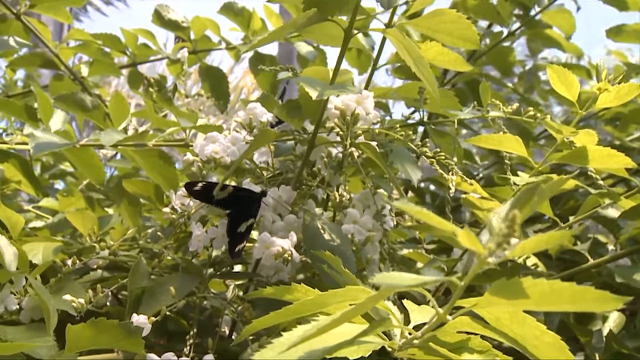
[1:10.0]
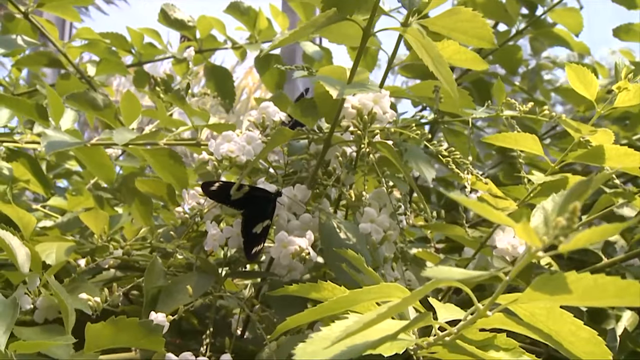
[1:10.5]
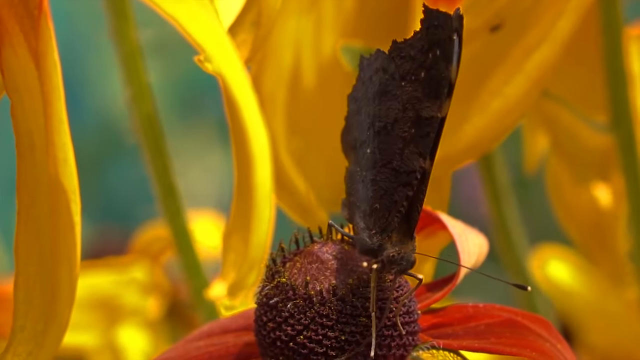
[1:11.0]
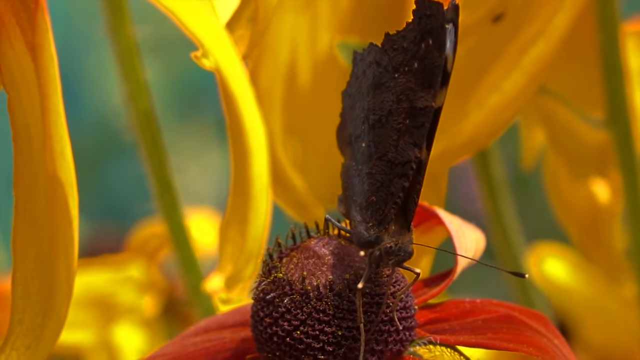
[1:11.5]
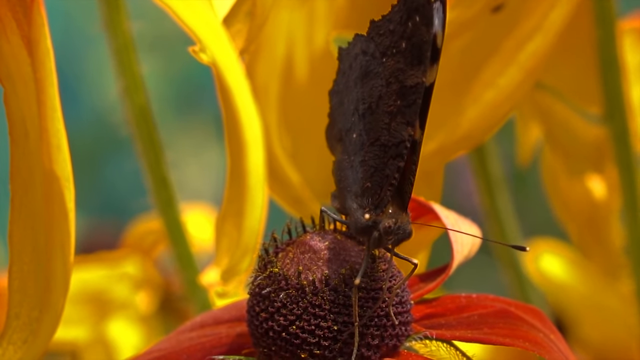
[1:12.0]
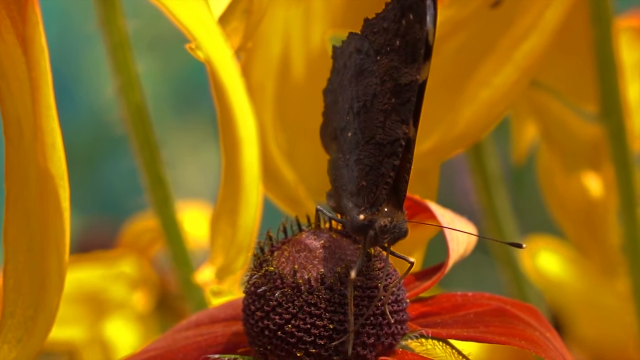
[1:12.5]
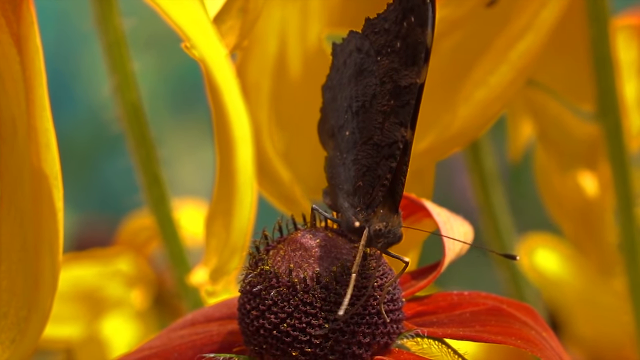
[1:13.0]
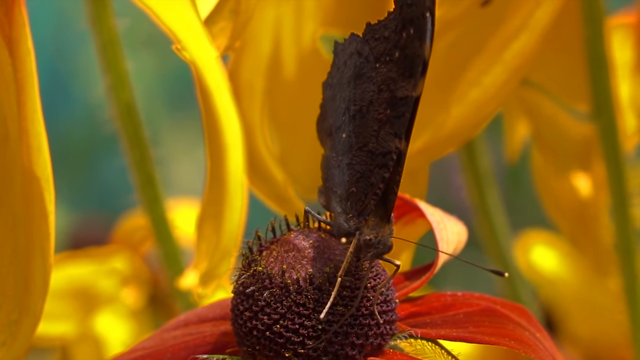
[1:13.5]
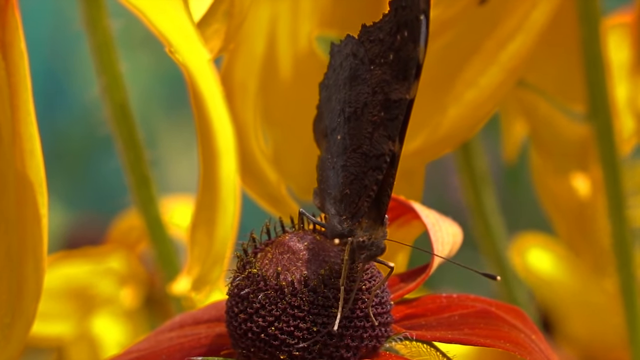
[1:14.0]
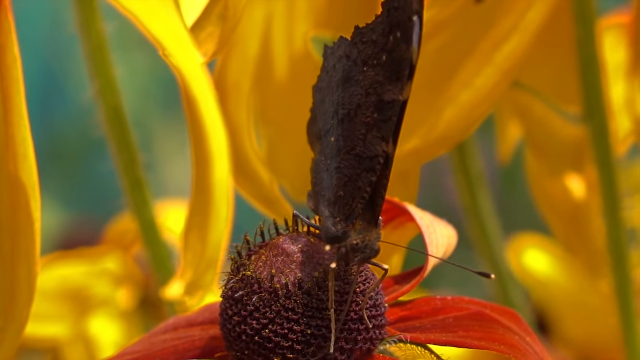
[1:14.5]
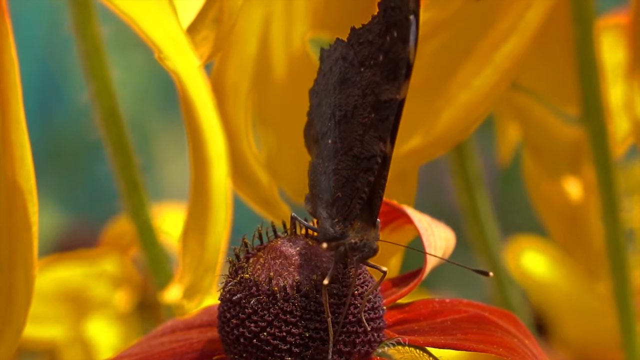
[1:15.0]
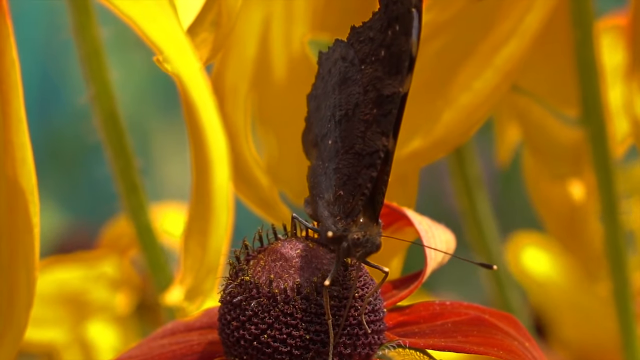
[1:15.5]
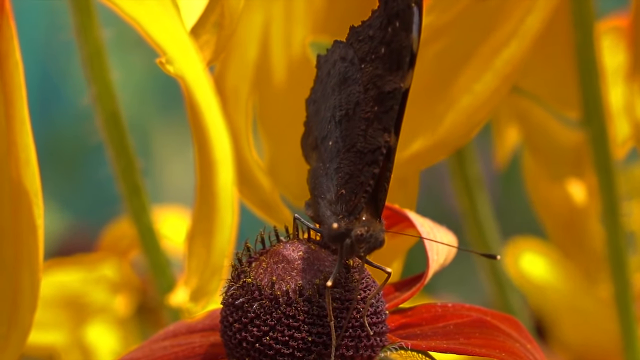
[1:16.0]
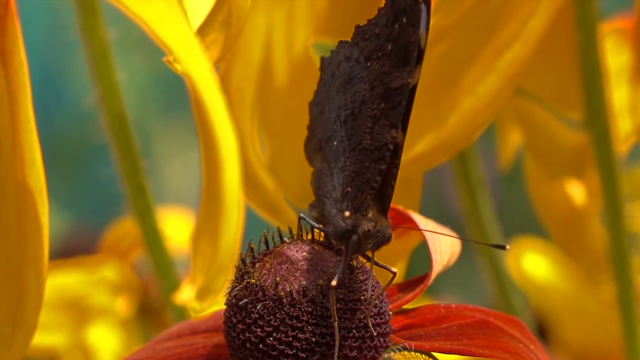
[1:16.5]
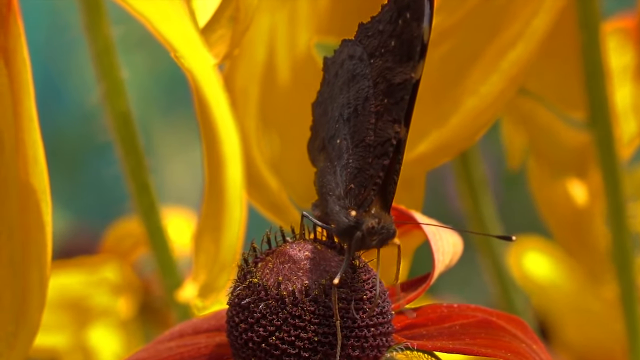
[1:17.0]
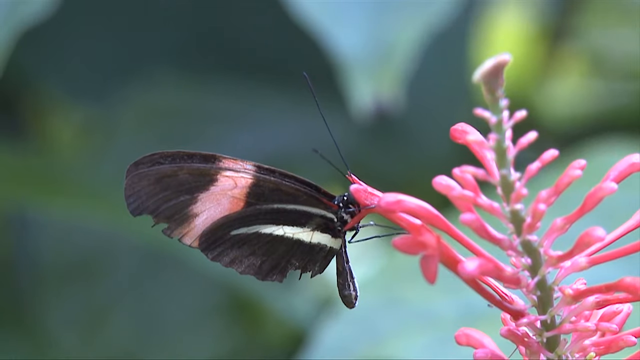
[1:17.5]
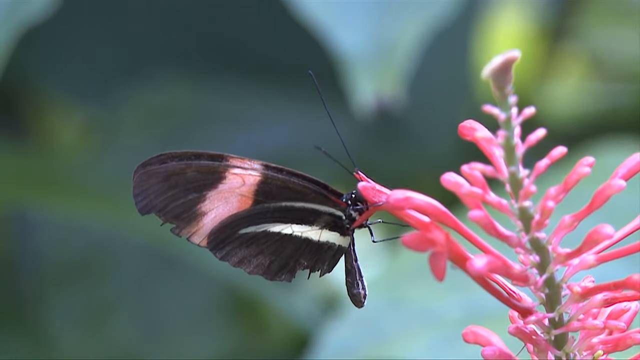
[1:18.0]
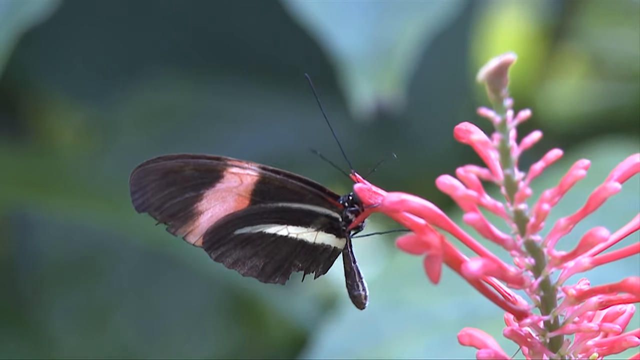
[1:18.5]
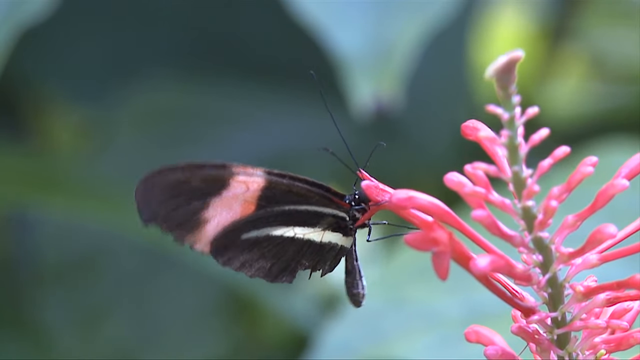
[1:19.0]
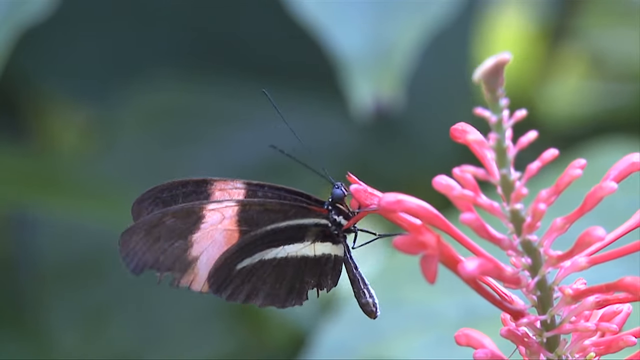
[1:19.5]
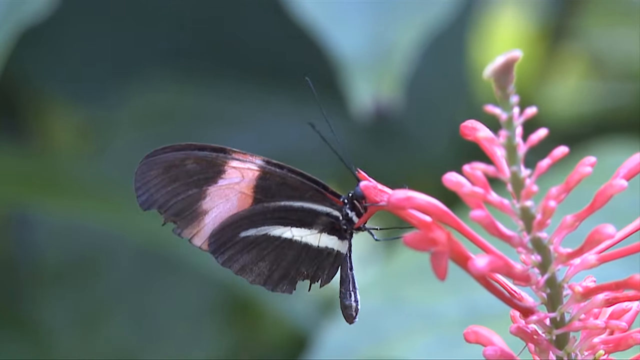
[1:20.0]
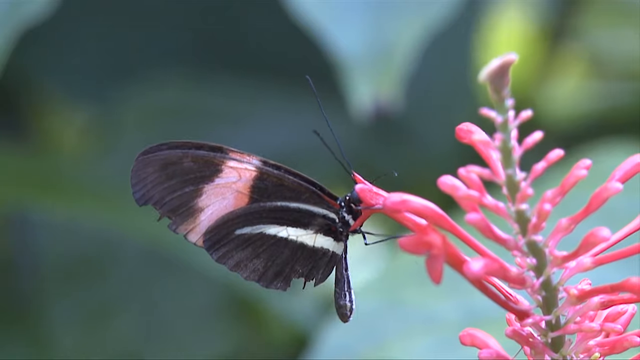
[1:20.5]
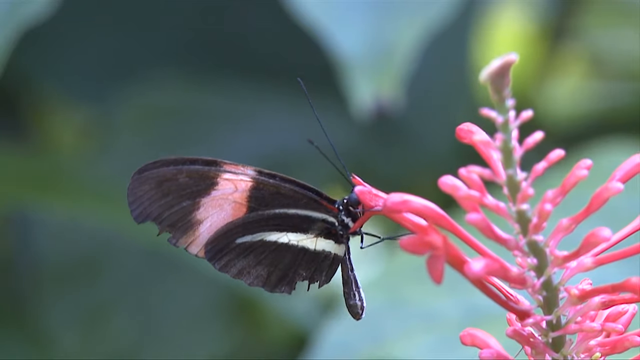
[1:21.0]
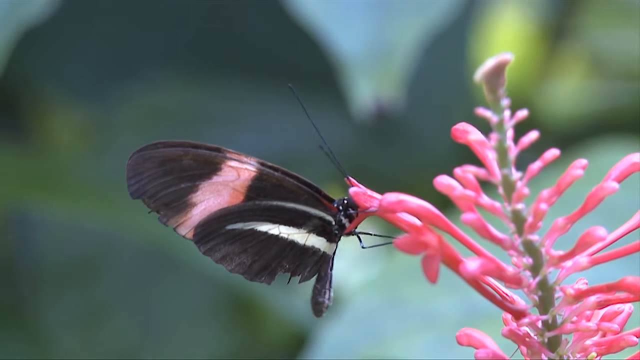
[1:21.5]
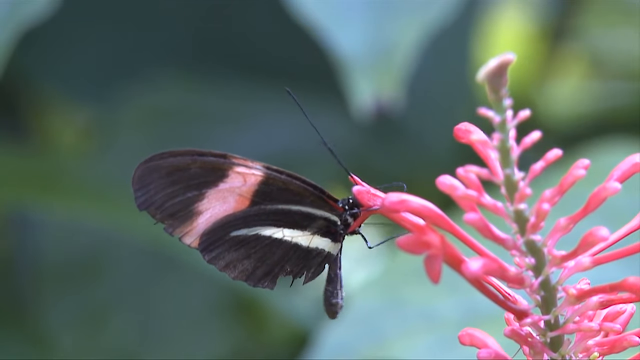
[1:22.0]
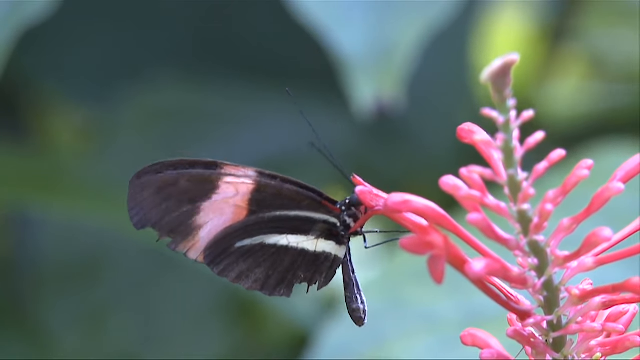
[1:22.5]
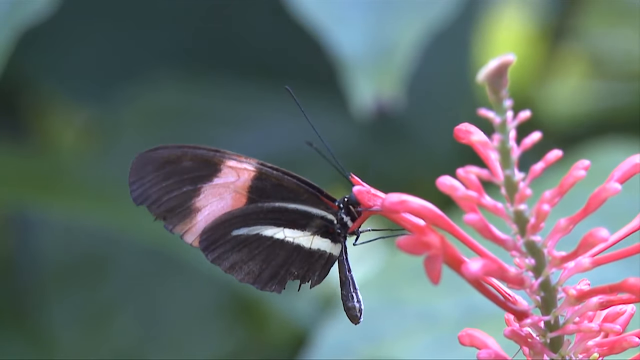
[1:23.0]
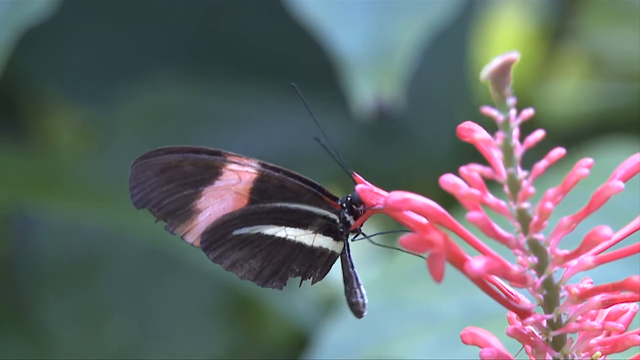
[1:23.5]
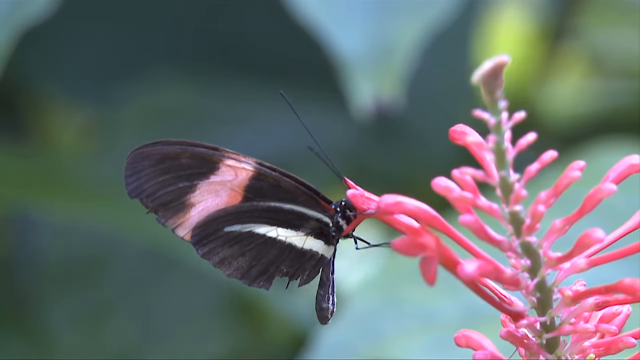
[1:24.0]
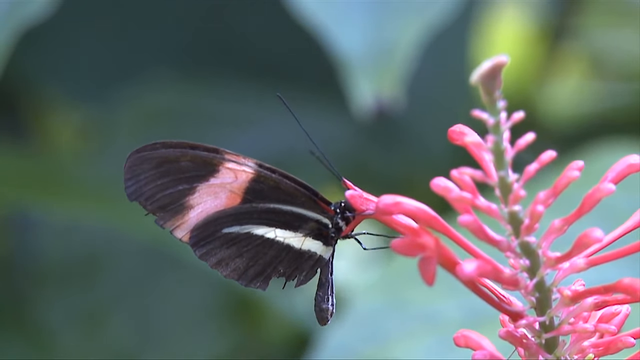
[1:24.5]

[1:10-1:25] The white lettering at the top reads "Butterflies, fun butterfly facts for kids." On the left side is a yellow circle with a green circle inside, and in the very middle is an orange tiger with black and white stripes around its face. In the center, a black butterfly with white markings on its wings sits on top of rounded white flowers surrounded by green leaves from a bush. Next, against yellow petals and a slightly green background, a dark brown butterfly with black antennae and little black legs is on top of a brown circle with spikes on it. Then, against a fuzzy greenish gray background, a black and pink striped butterfly with black legs and black antennae hangs off a pink-stemmed flower.